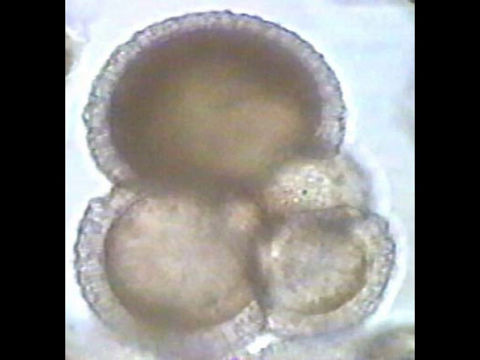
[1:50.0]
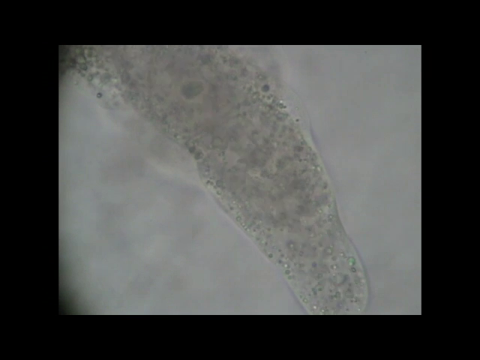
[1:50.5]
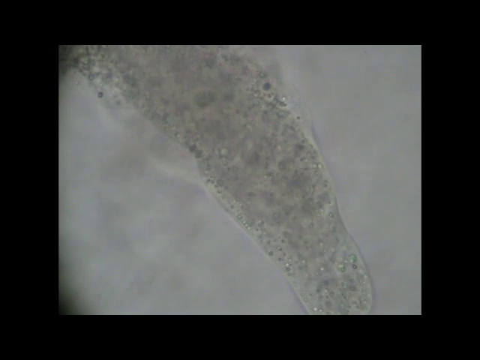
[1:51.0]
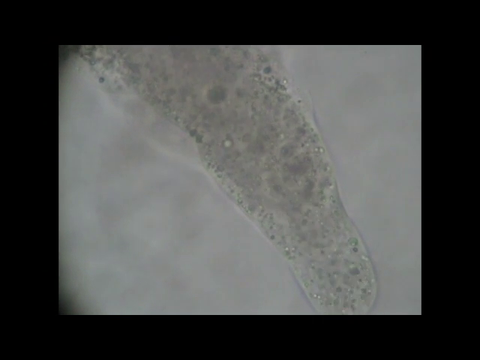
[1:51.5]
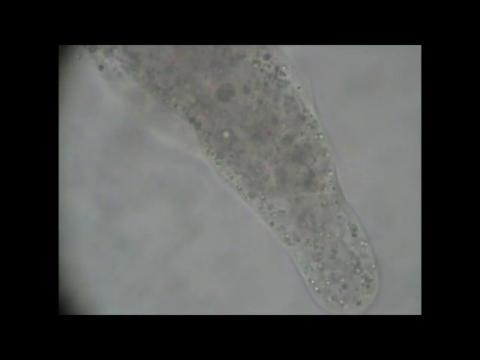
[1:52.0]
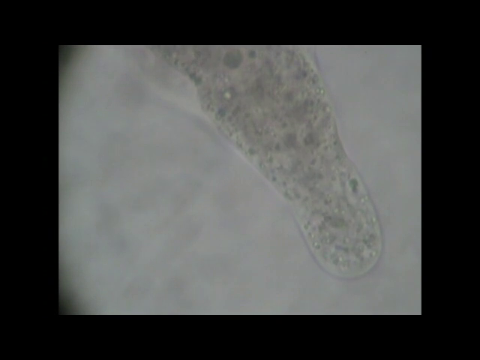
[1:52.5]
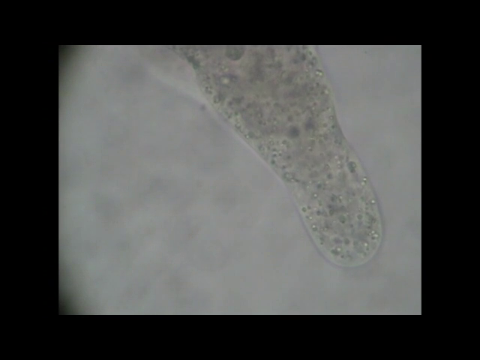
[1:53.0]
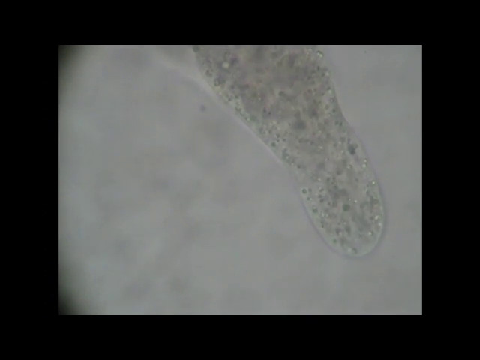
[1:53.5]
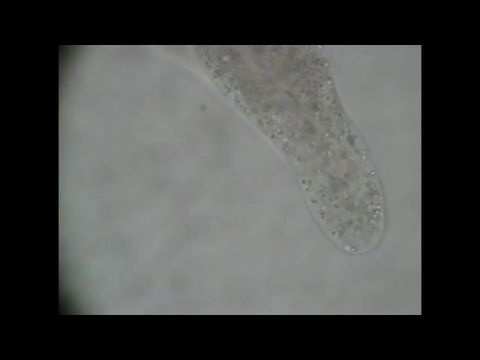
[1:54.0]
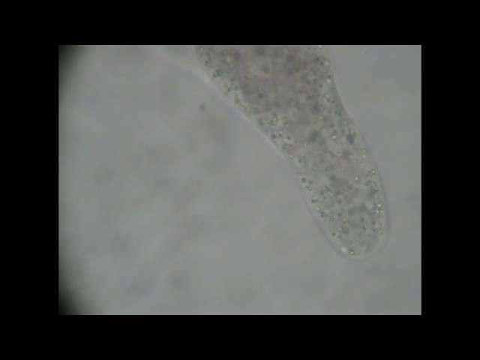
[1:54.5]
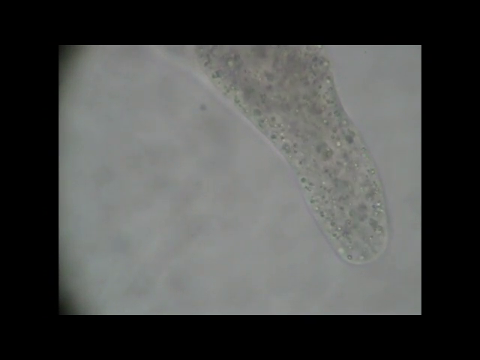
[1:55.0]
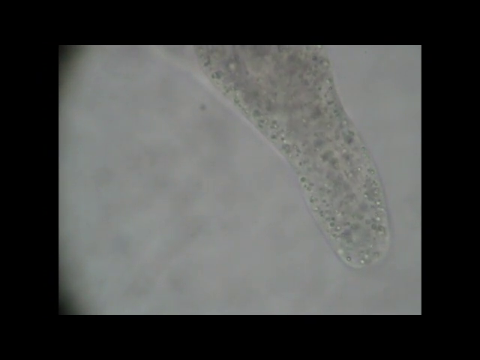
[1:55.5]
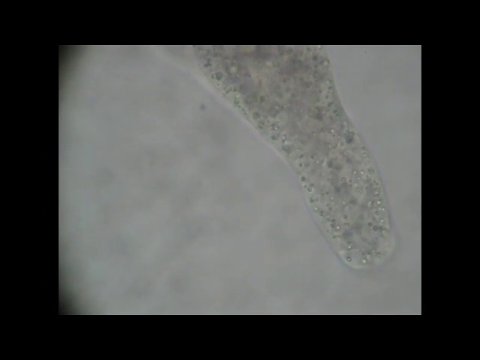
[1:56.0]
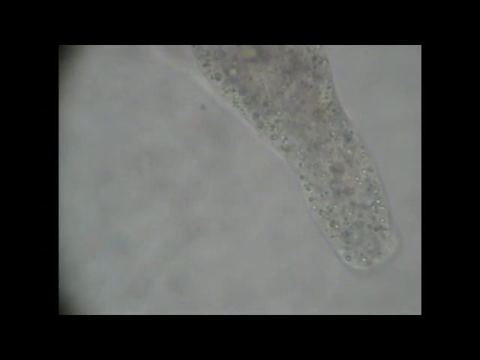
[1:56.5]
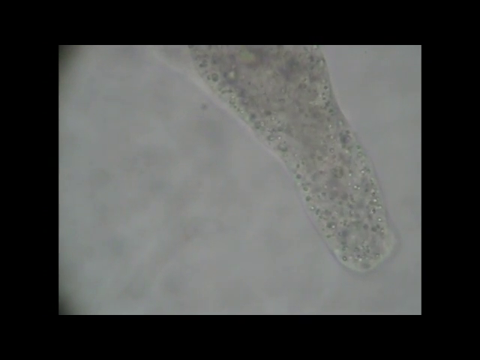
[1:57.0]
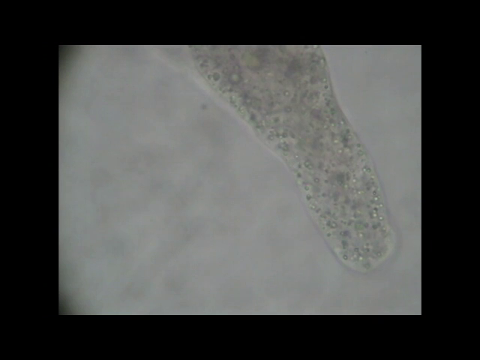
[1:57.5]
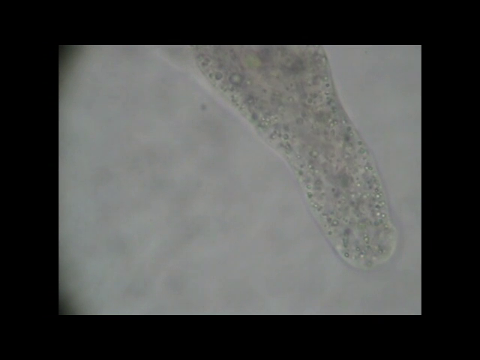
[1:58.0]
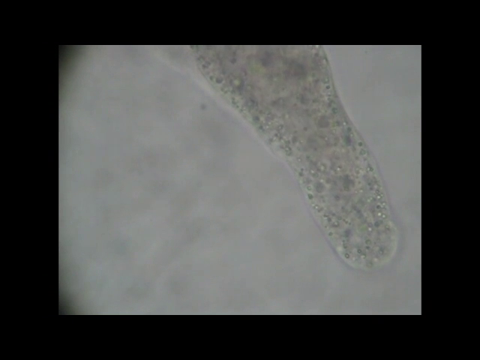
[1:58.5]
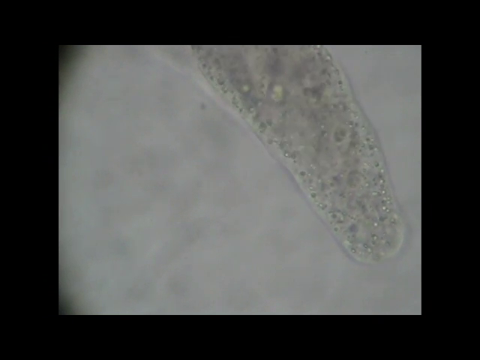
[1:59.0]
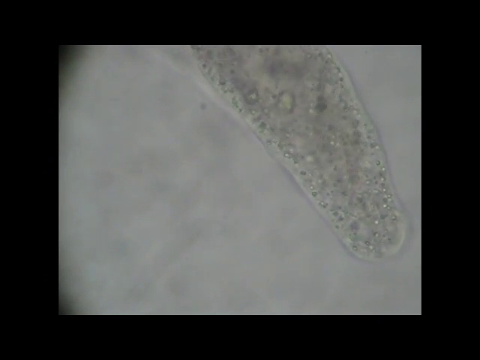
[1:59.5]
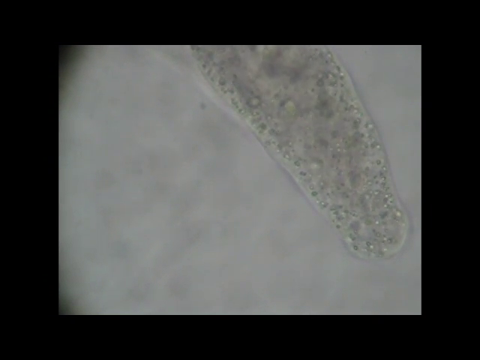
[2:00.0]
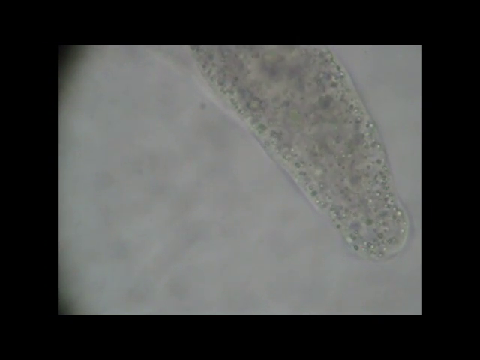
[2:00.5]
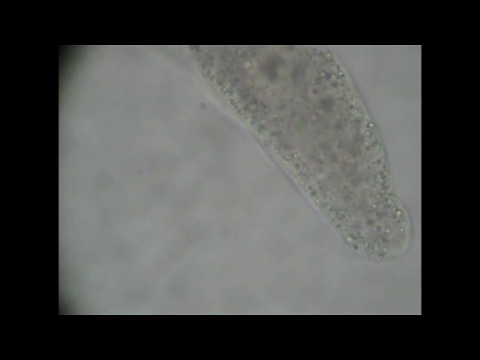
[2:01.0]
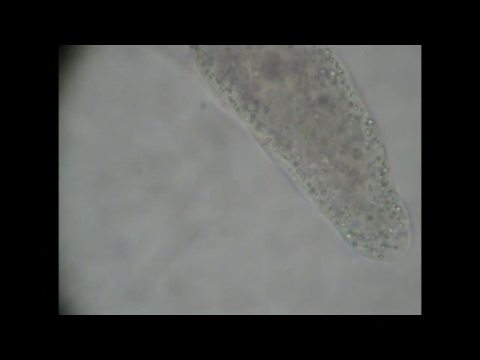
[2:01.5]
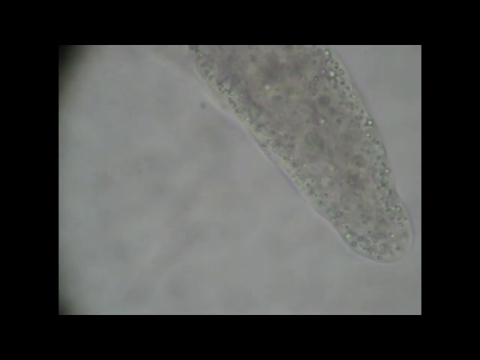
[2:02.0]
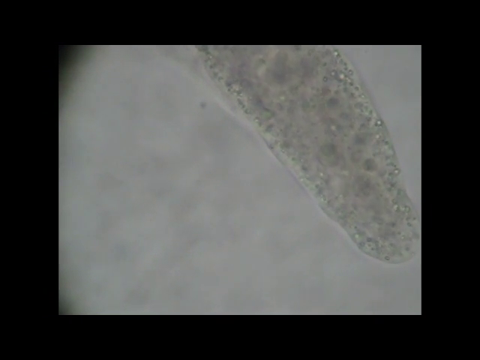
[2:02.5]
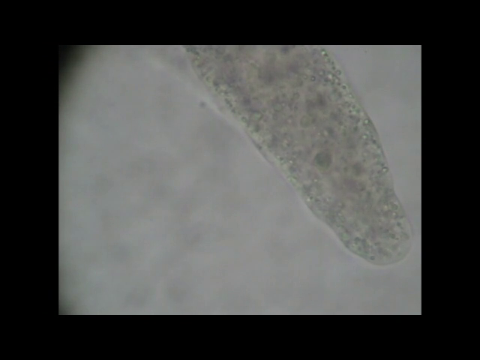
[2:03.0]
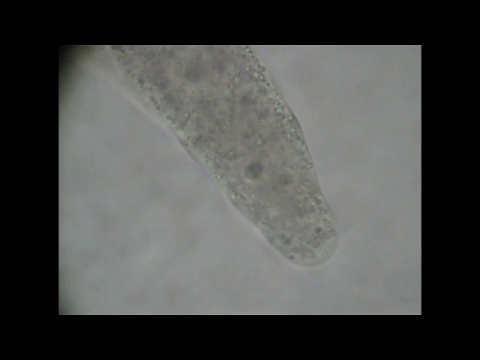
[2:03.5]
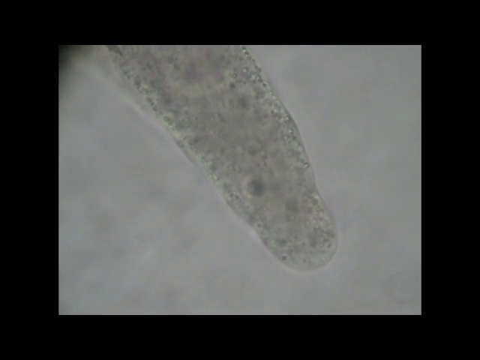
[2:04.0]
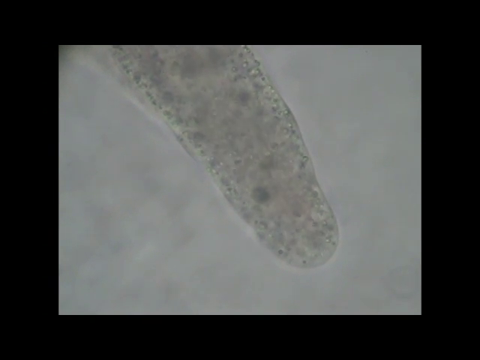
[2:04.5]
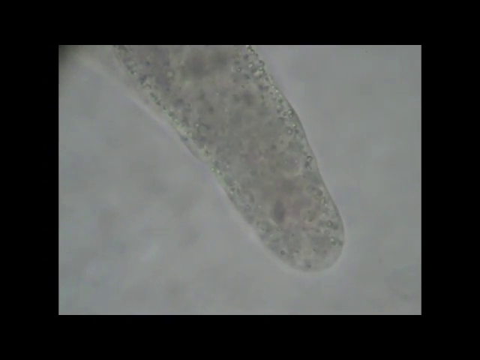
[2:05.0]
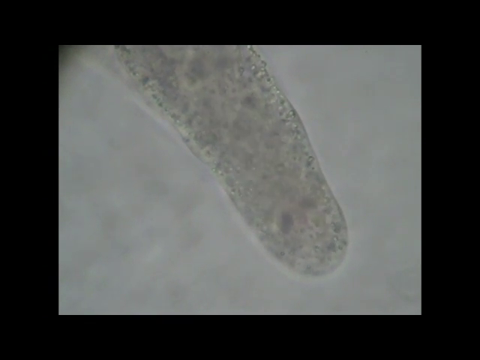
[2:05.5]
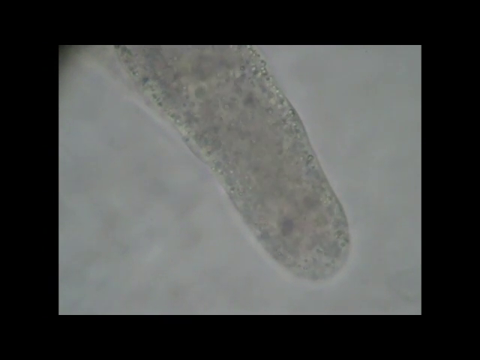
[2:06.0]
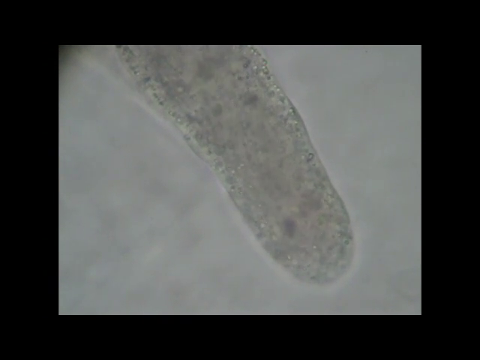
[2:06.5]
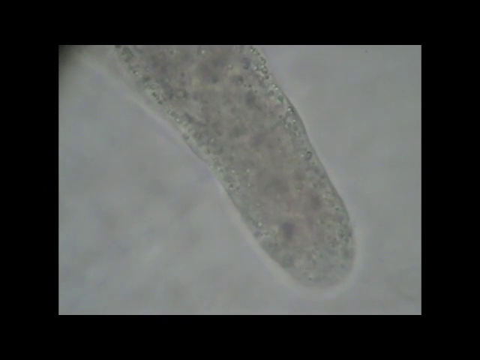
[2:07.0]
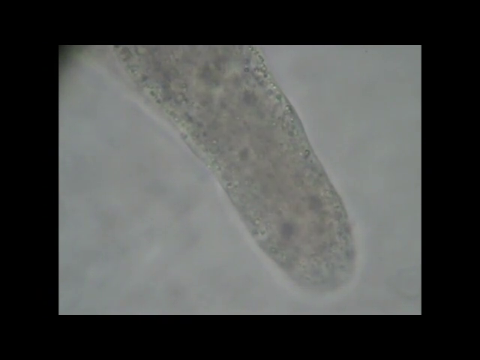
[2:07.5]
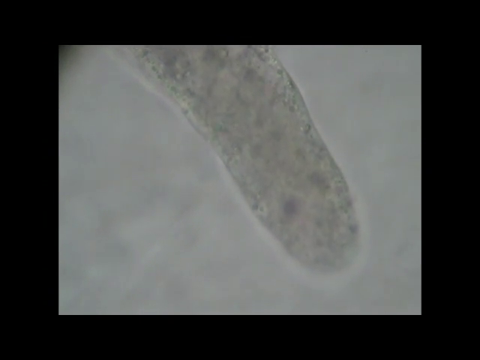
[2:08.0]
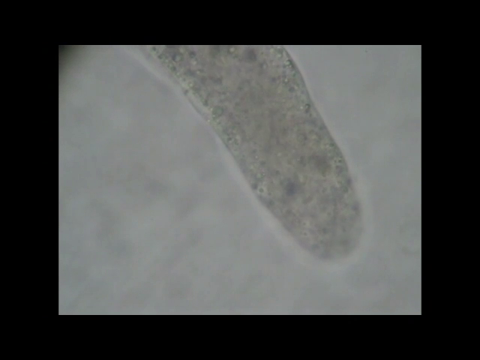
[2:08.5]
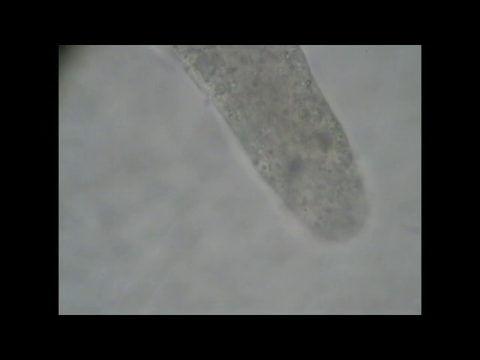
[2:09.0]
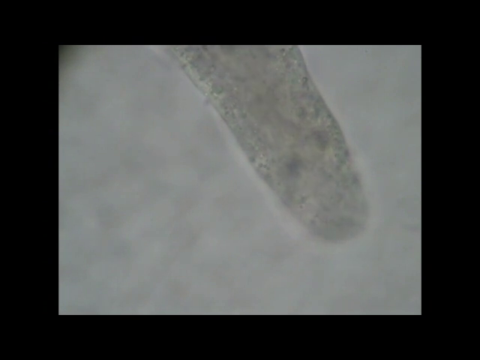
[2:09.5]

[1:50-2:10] The video returns to the image of very tiny cells or cell-like objects contained within liquid that moves or flows from the top left of the screen to the bottom right. It could be a single organism with many smaller cells inside, or liquid moving across a slide full of cells or debris, but it does look like one organism, since there is some sort of barrier or exterior that it moves within. It is almost shaped like a centipede or a worm, translucent, with a small river of fluid flowing through its interior, from the top left and center of the screen down to the bottom right. The very small details suggest a microscopic object, and the image is in black and white, like a recording from a microscope.